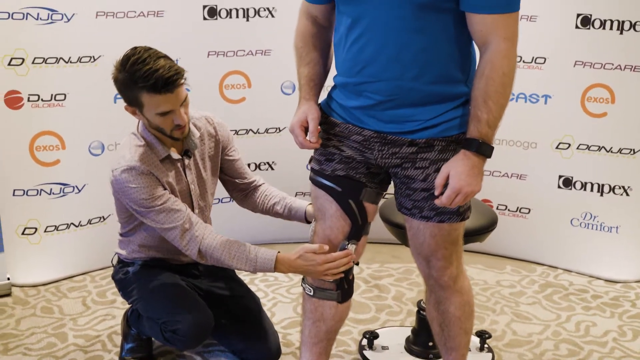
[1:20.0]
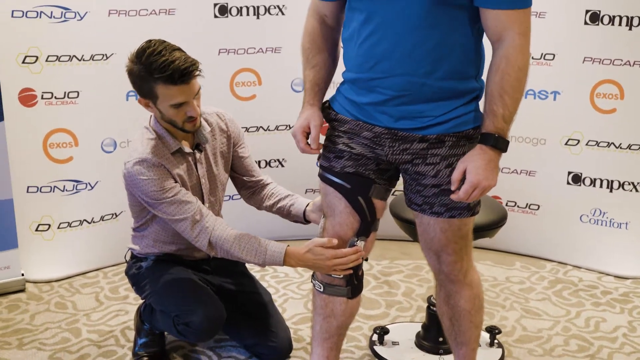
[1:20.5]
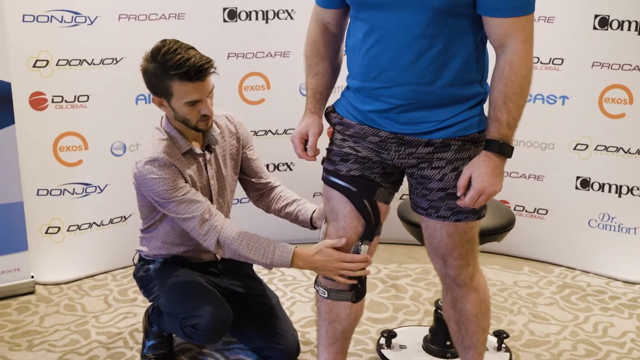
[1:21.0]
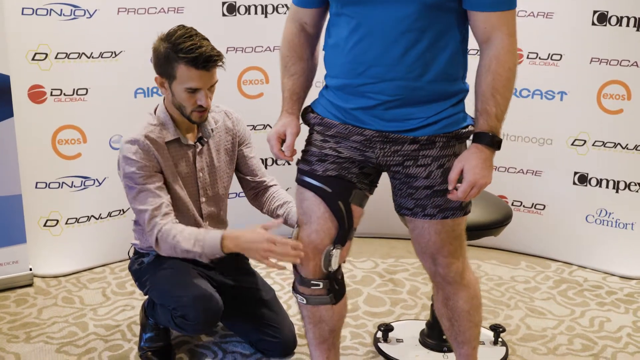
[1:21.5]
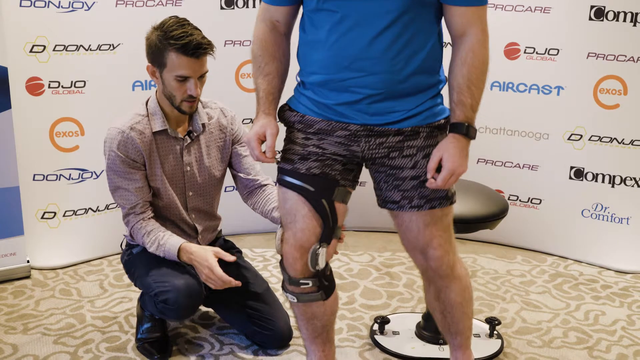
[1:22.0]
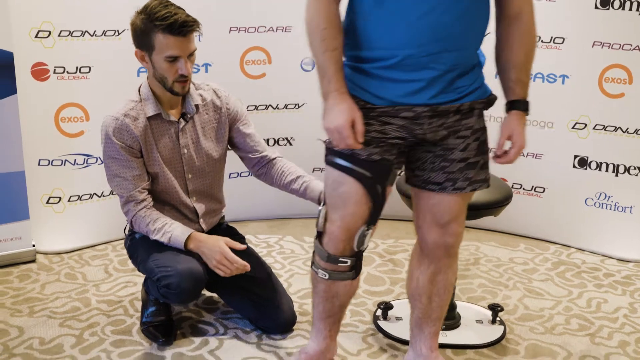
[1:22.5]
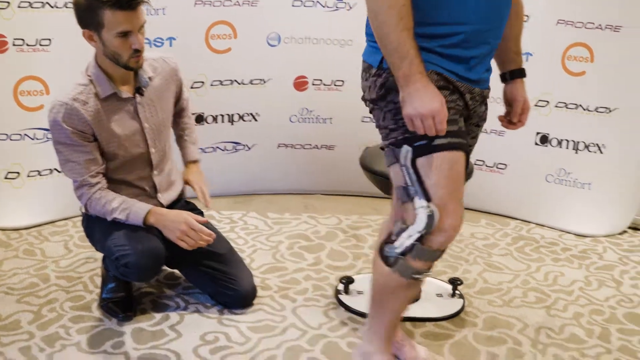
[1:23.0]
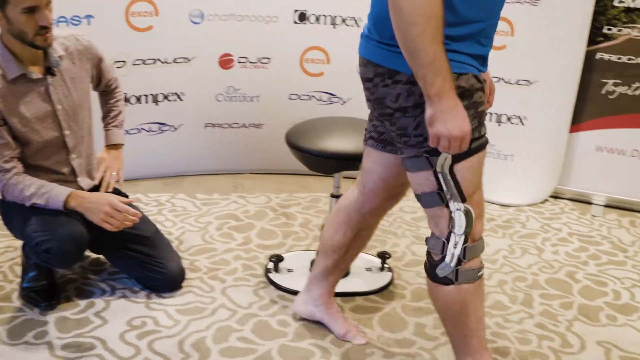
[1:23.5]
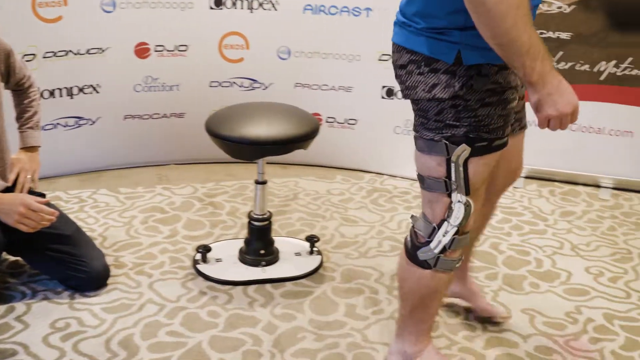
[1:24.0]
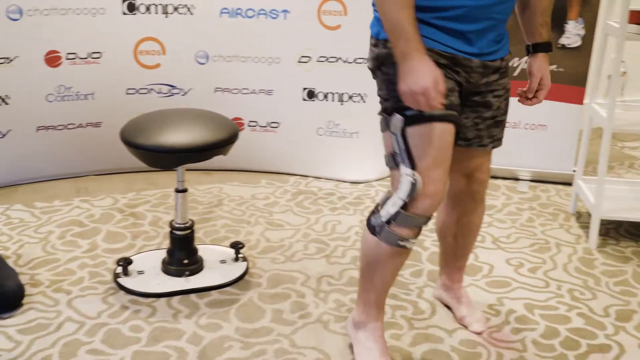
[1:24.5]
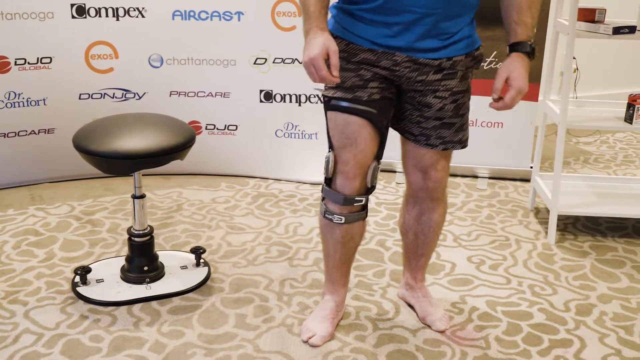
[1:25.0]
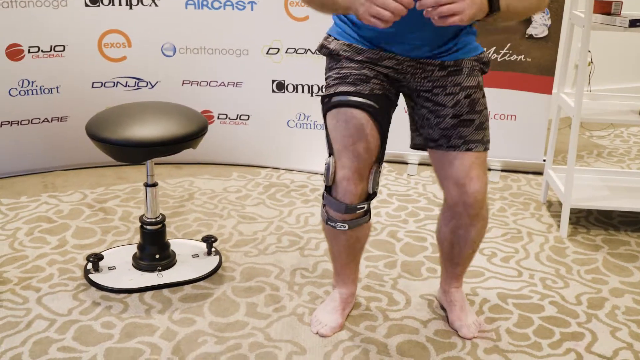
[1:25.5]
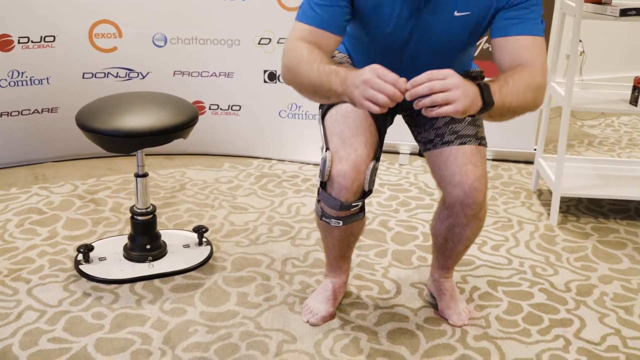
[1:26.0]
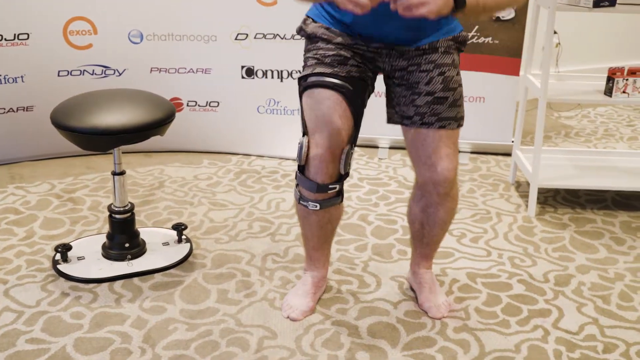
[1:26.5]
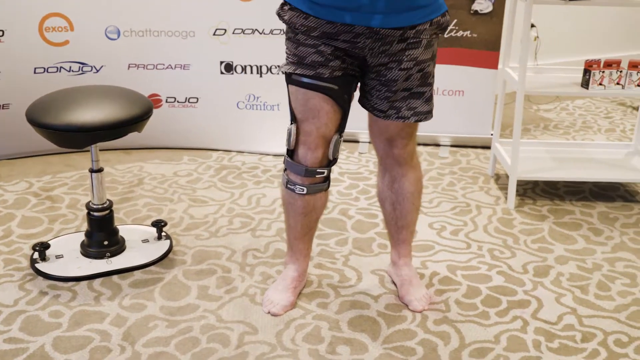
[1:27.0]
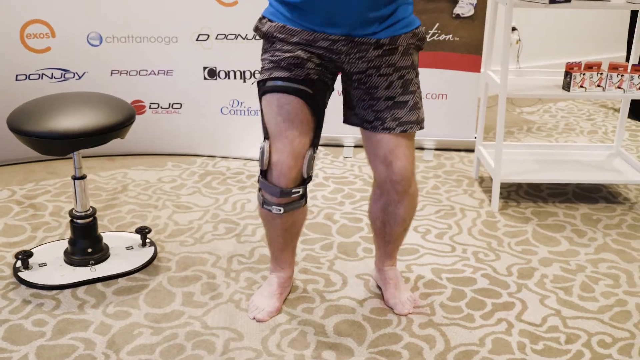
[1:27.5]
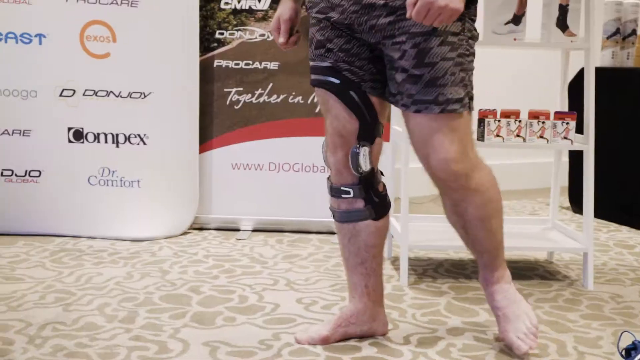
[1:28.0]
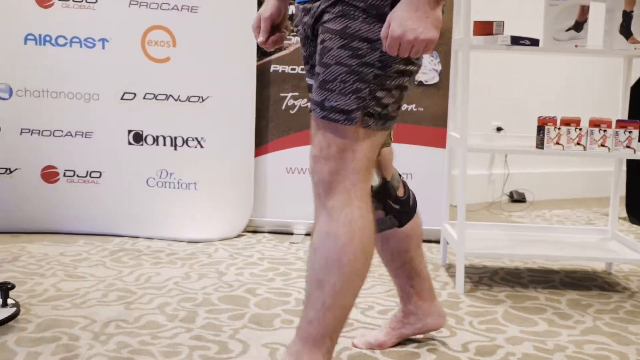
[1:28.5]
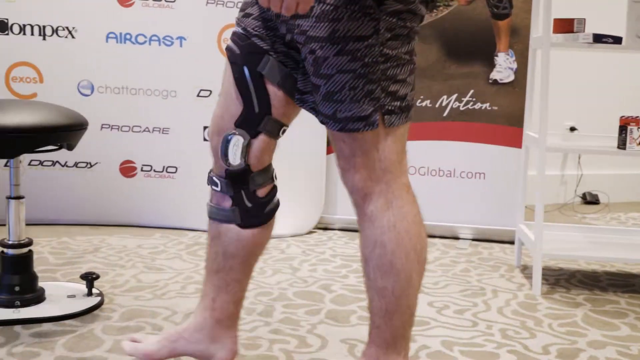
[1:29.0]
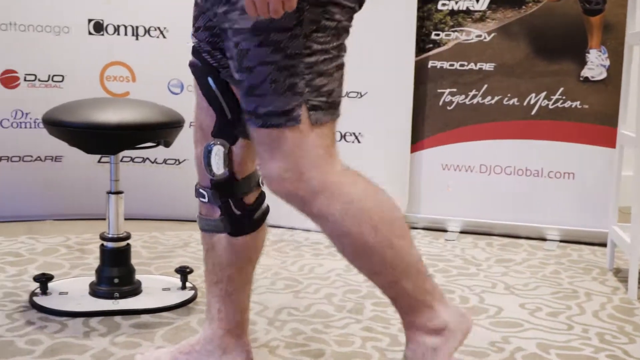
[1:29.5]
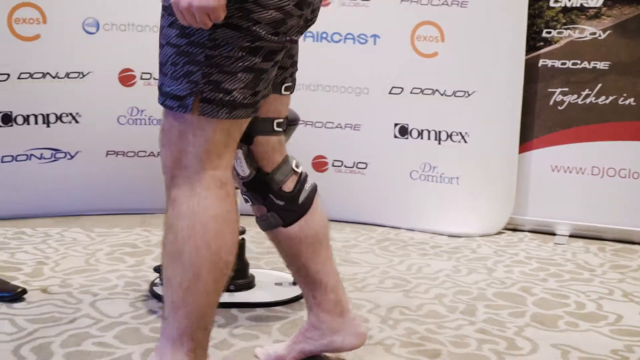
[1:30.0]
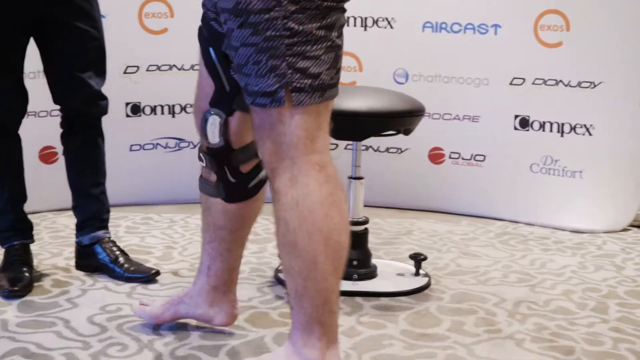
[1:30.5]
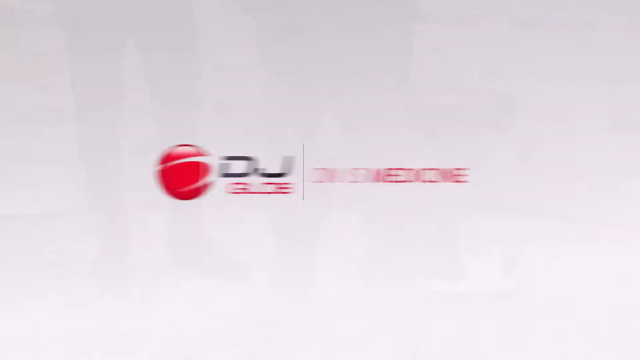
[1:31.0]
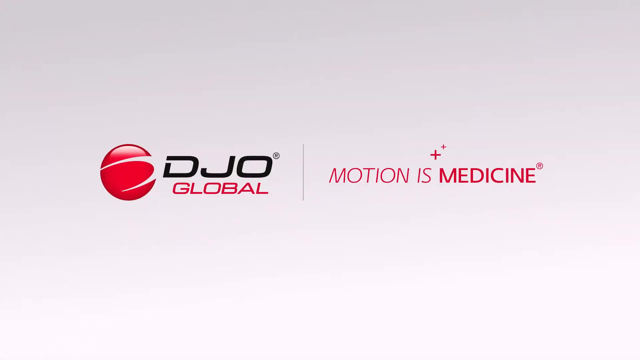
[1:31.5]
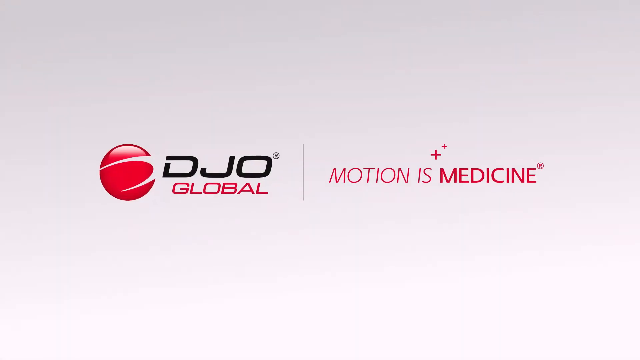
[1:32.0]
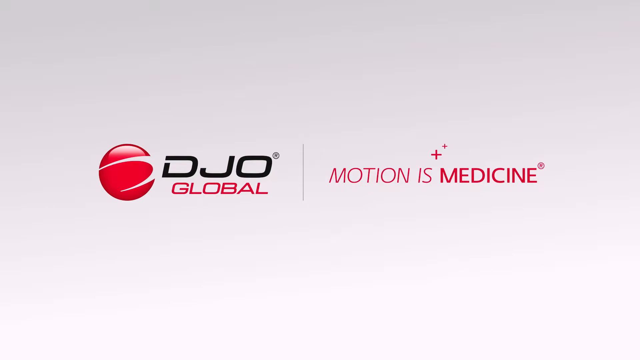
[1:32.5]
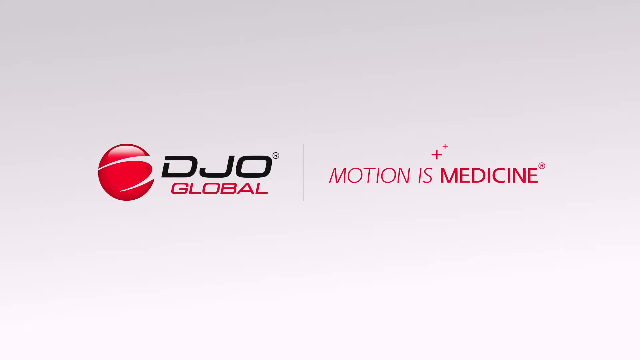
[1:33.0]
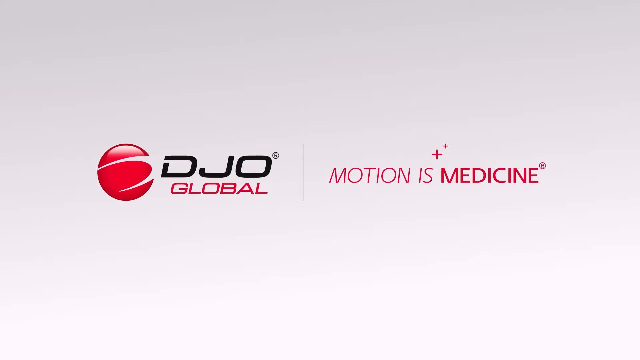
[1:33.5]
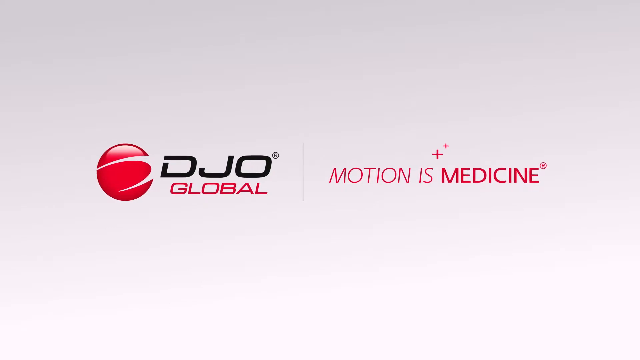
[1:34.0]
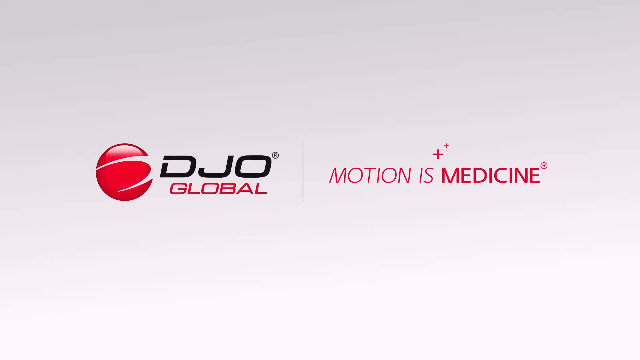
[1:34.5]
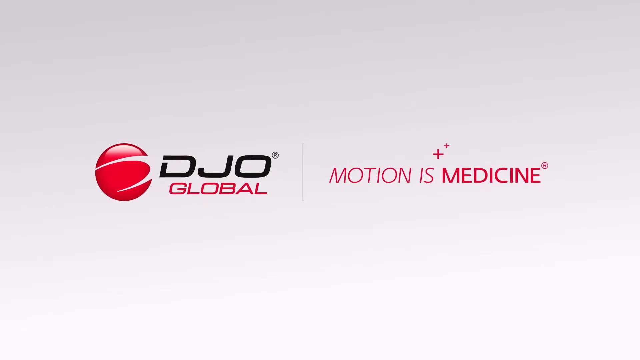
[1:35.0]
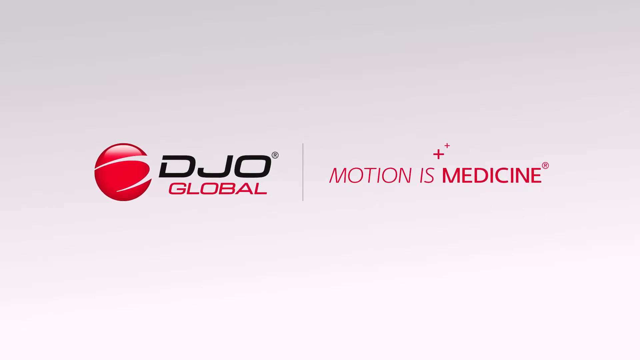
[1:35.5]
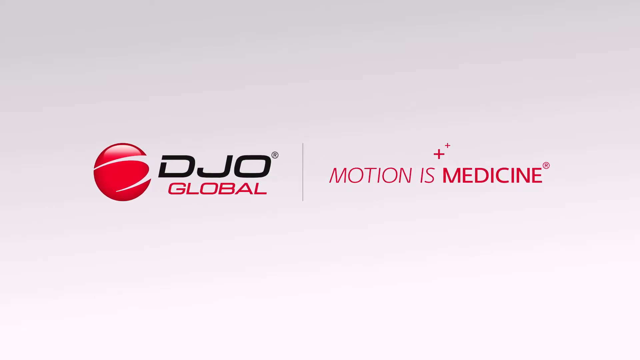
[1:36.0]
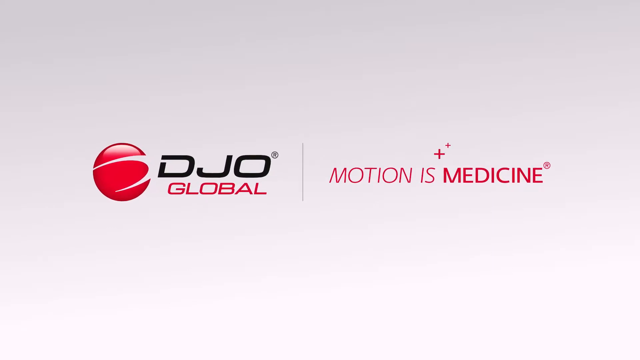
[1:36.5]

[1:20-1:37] One man stands with the black strappy brace covering his knee and upper thigh, while another man next to him is down on one knee with one hand over the front of the brace and his other hand behind the standing man's thigh. He pulls at the brace a little, adjusting it, and pushes the man's leg forward so it bends slightly. He then motions for the man to walk around, and the man walks to the right, stops, does two squats, and walks back to the left. The shot is a close-up showing the man only from the chest down, focused on the brace on his leg, so his face is not visible. The video ends on a light gray screen with the DJO Global logo on the left side and "Motion is Medicine" in red font on the right side.